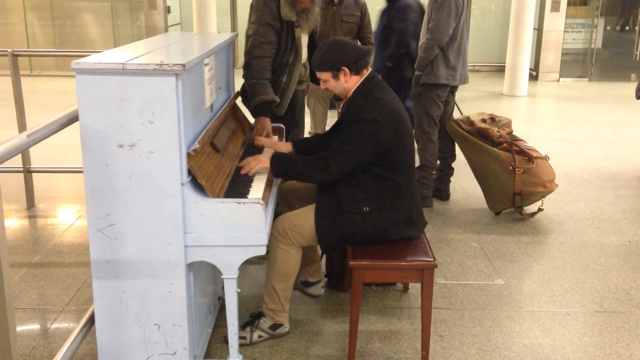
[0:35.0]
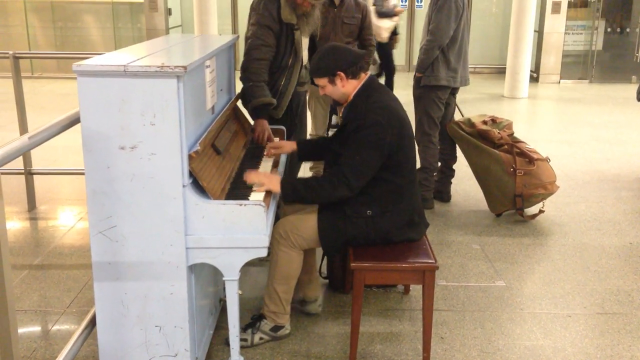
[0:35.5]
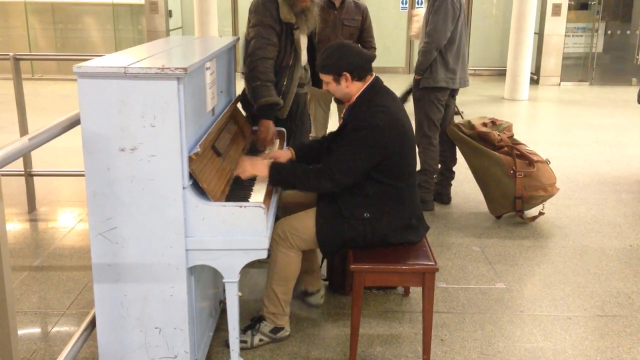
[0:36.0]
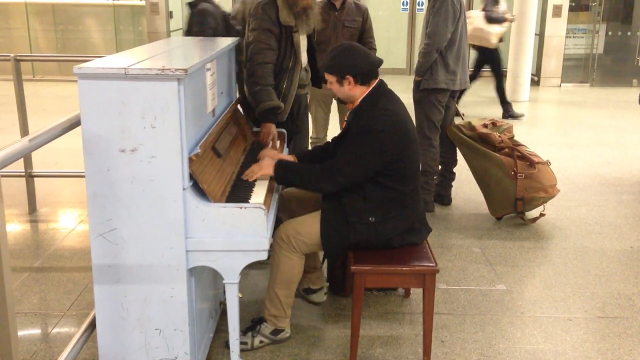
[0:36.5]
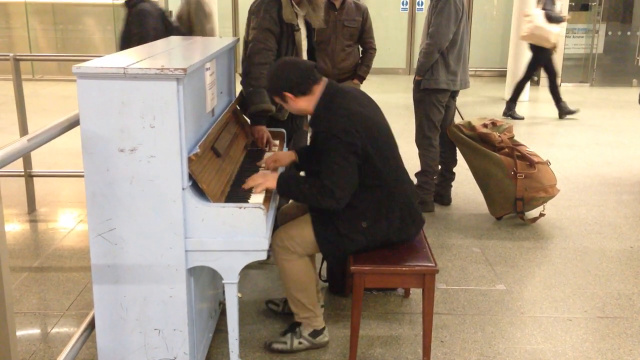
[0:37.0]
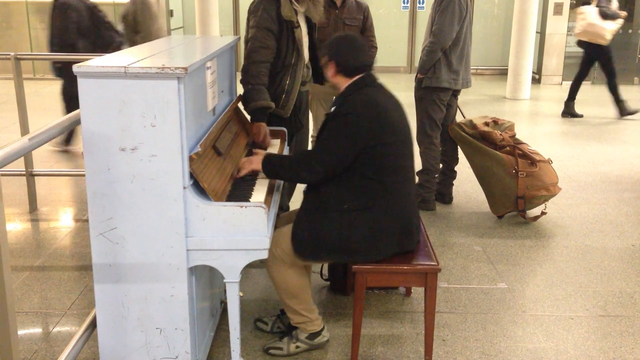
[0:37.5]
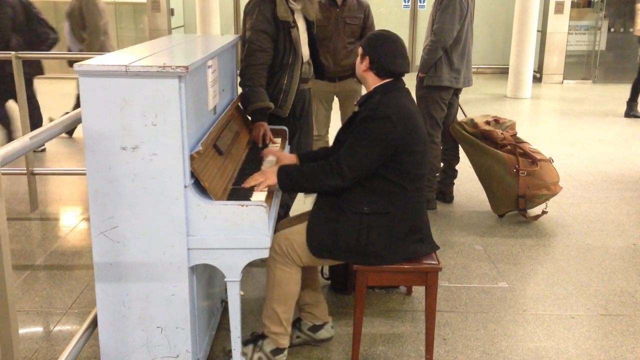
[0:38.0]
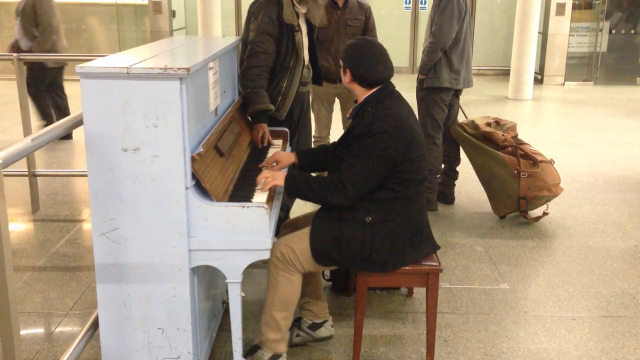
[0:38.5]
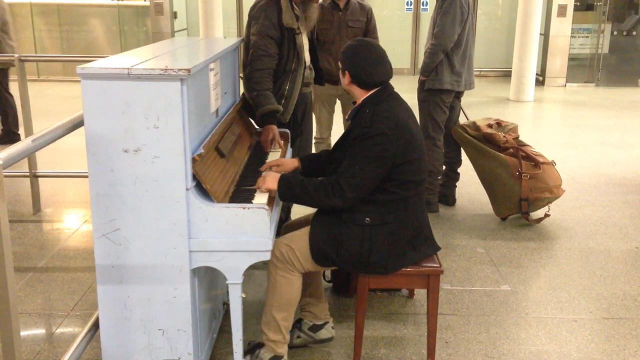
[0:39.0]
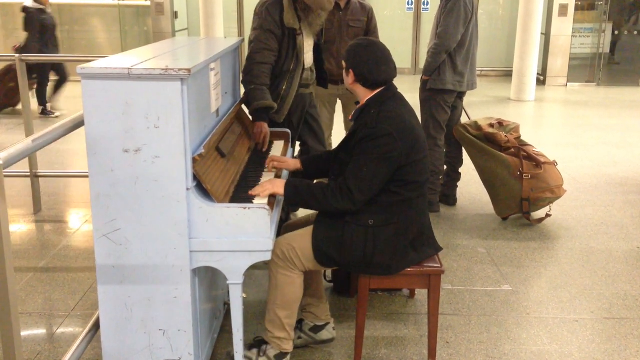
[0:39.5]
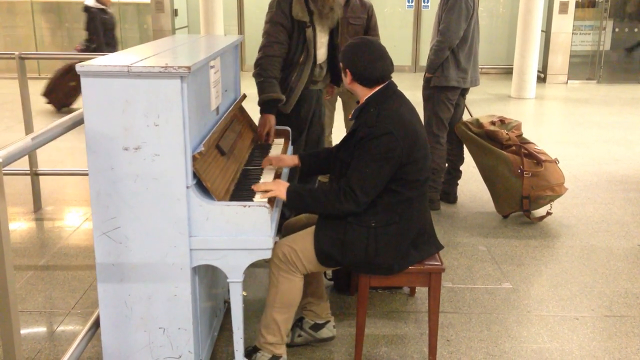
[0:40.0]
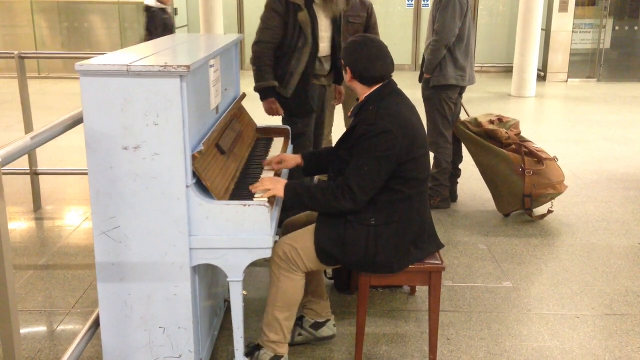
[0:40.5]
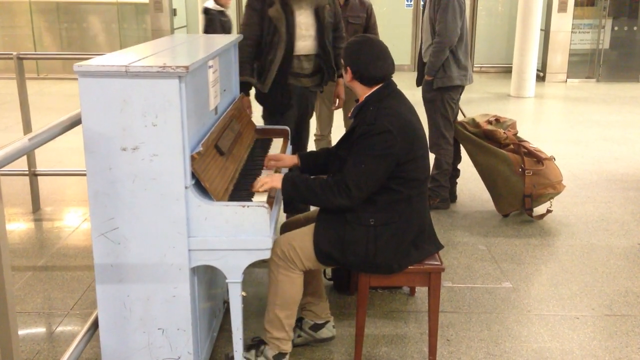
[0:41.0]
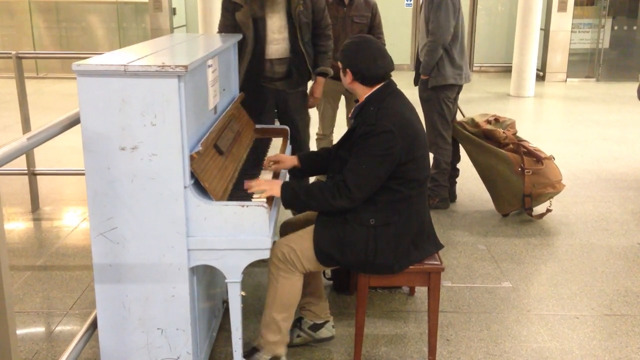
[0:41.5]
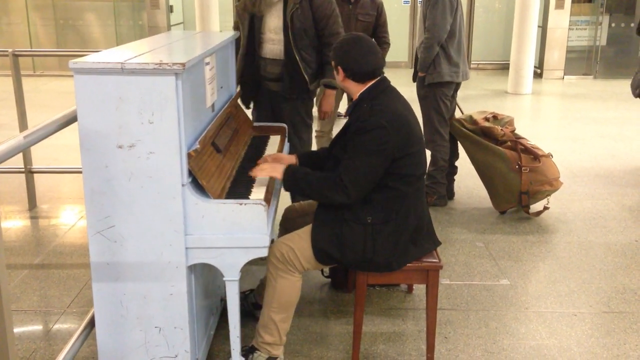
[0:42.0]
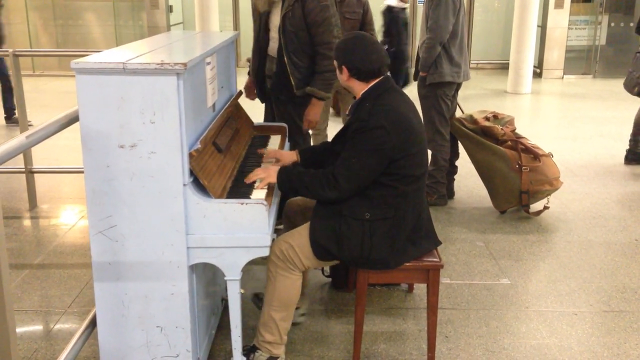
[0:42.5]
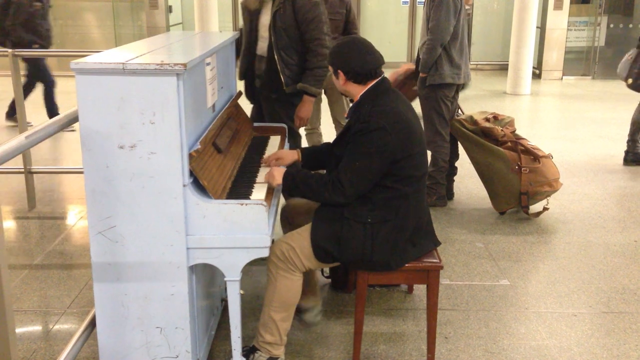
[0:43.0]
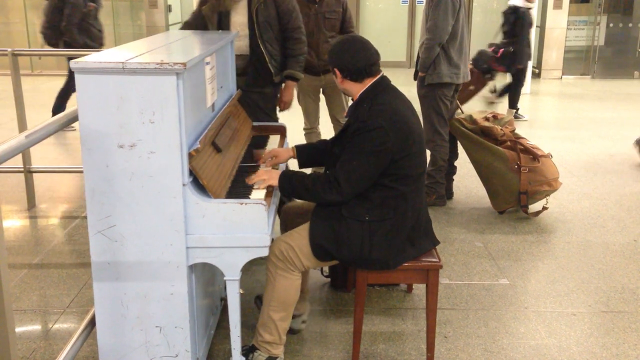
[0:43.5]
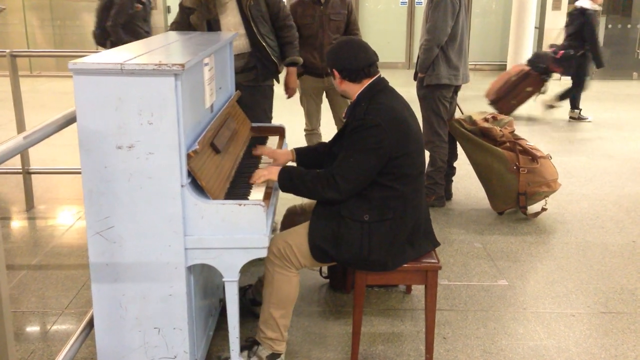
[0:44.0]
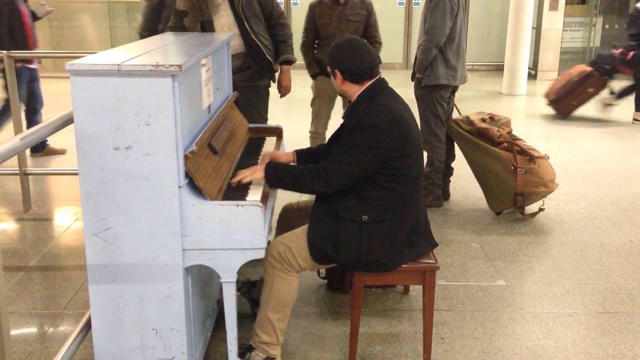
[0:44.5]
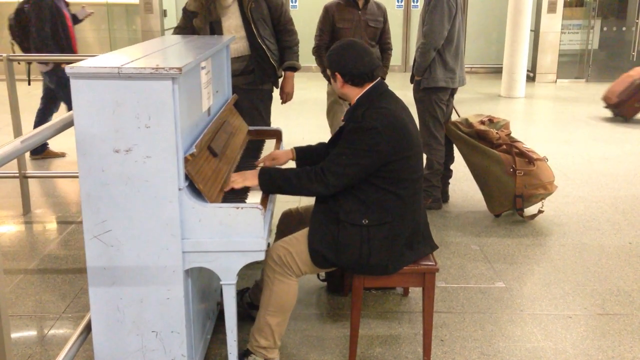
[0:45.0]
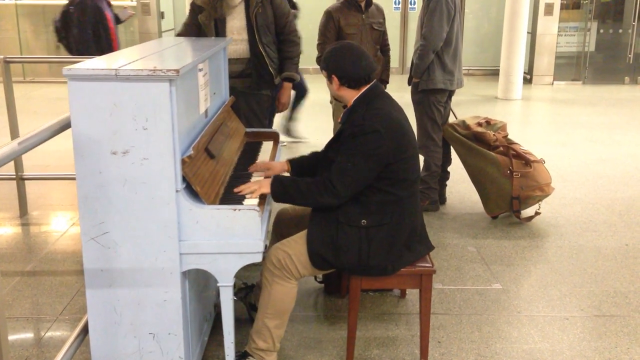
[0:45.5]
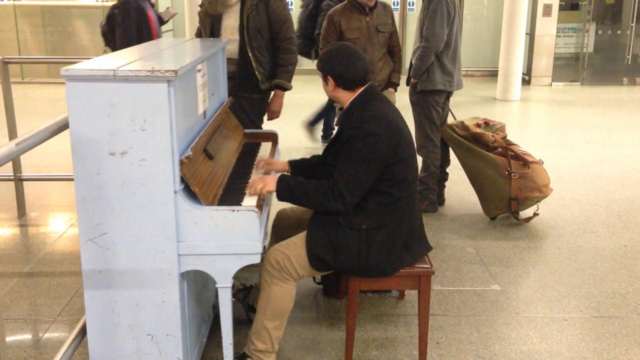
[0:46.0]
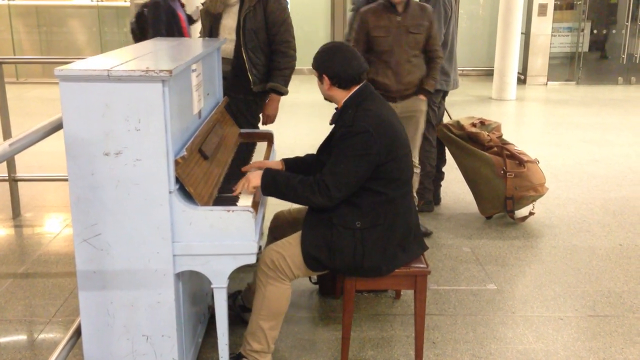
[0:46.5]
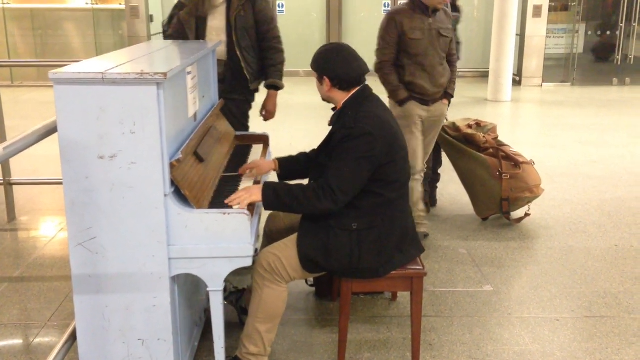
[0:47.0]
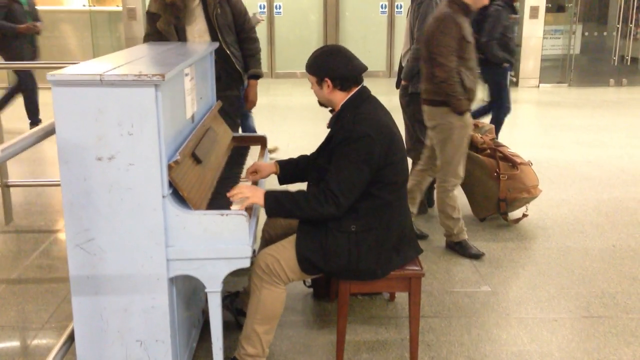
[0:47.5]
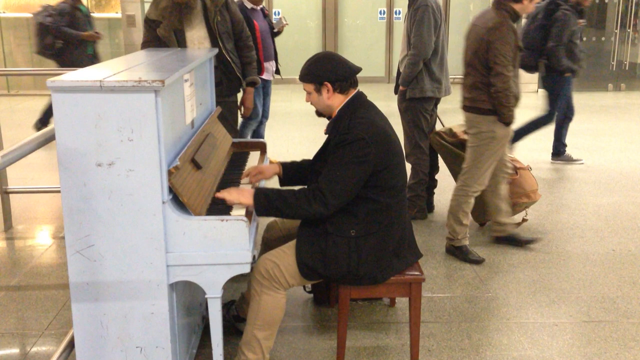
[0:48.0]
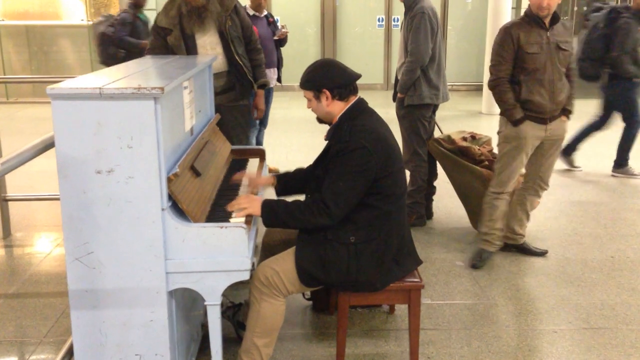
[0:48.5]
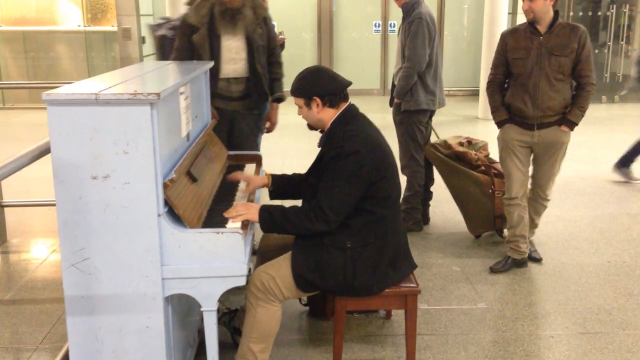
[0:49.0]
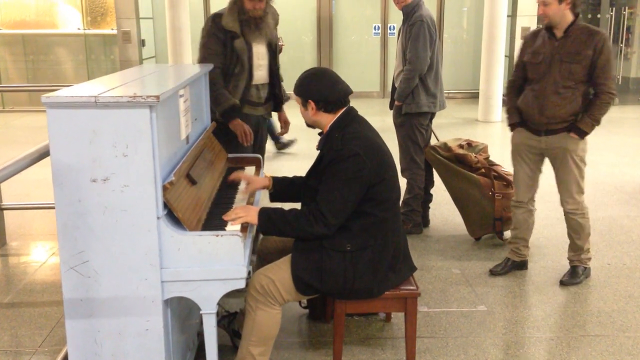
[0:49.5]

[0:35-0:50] The man is still playing the piano, and the larger man now joins in, tapping on some of the keys as the man in all black taps on the keys. Both of them play the piano together: one man stands up and plays the right side of the keys, while the man in the black jacket and black hat plays the left side. People stand around watching and listening, and others walk by. In the back there are glass doors, and it looks like outside is beyond them. People walk by with backpacks, with pull-on luggage and carrying luggage. The man in the black jacket and the man standing beside him seem to be having a really good time, enjoying each other's company as they play the piano together.